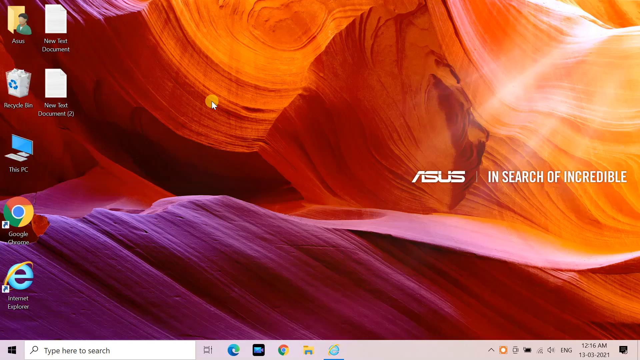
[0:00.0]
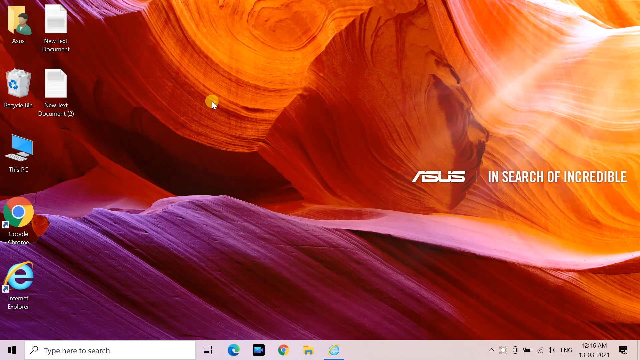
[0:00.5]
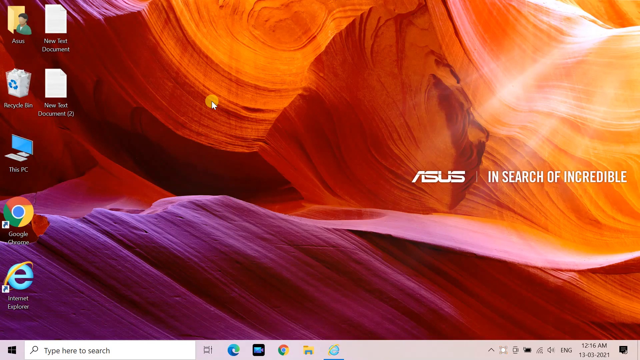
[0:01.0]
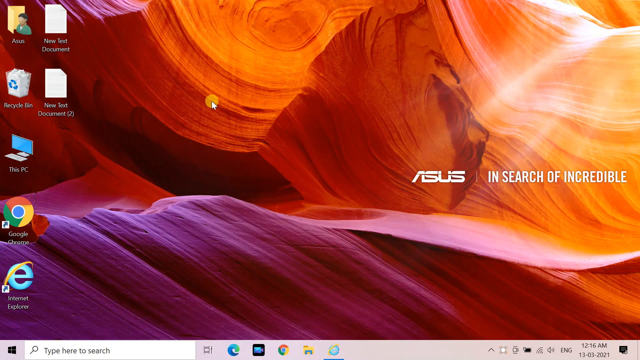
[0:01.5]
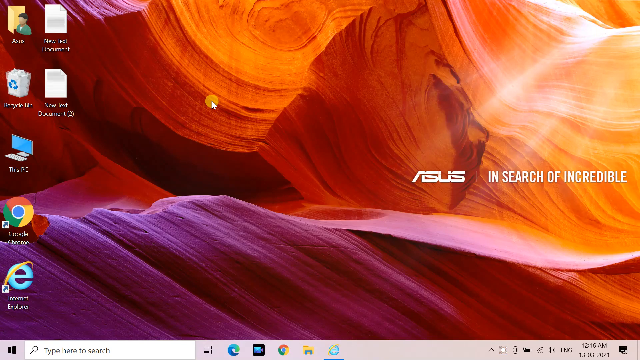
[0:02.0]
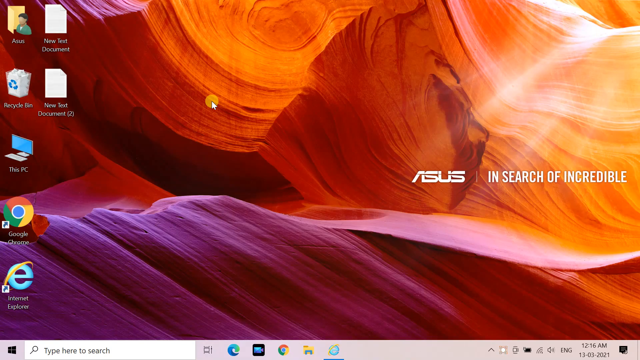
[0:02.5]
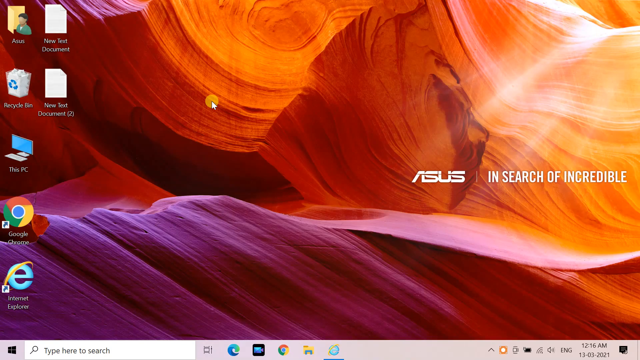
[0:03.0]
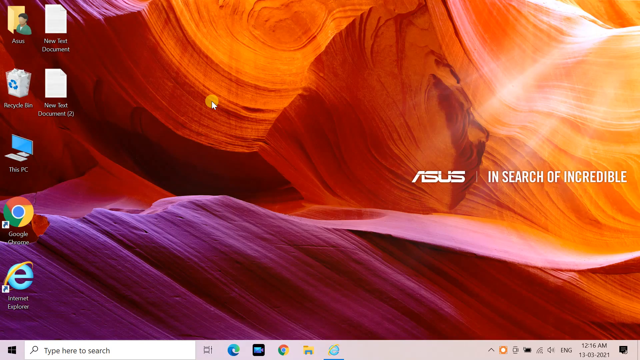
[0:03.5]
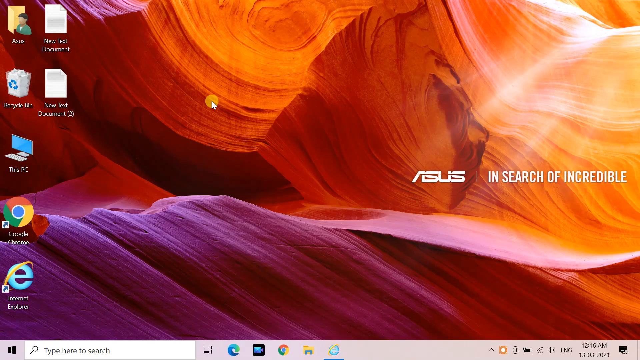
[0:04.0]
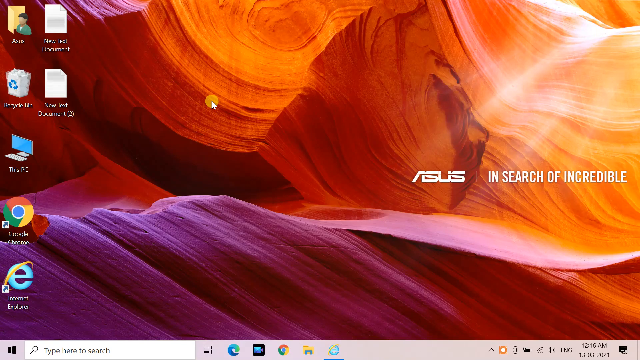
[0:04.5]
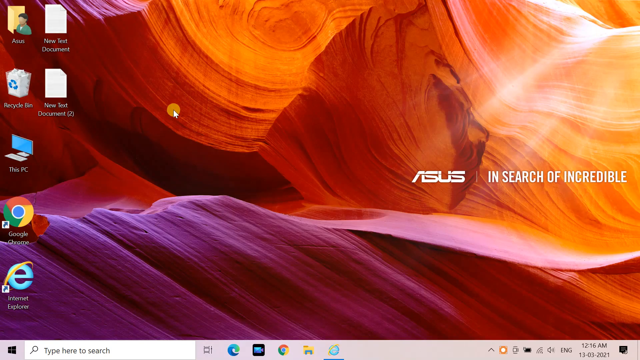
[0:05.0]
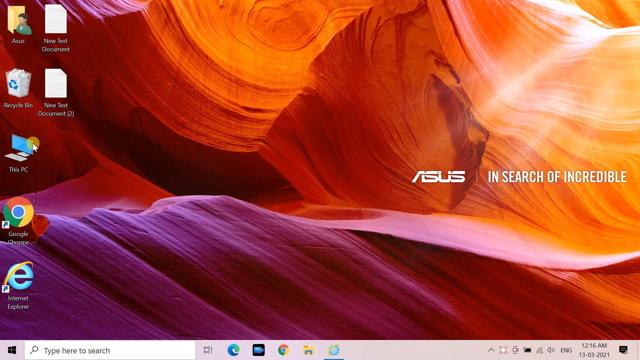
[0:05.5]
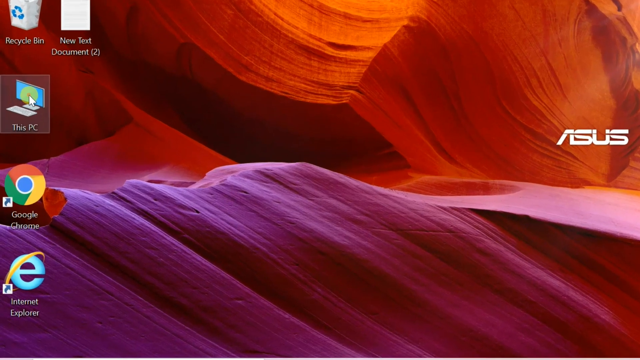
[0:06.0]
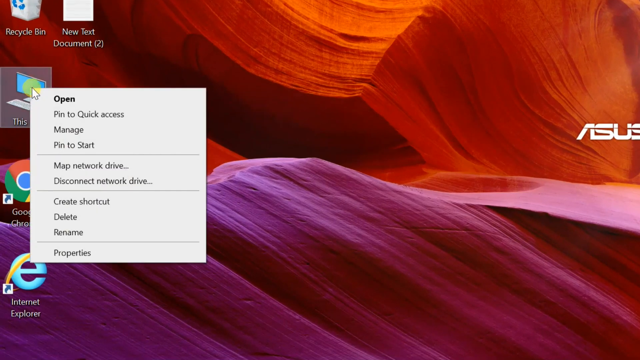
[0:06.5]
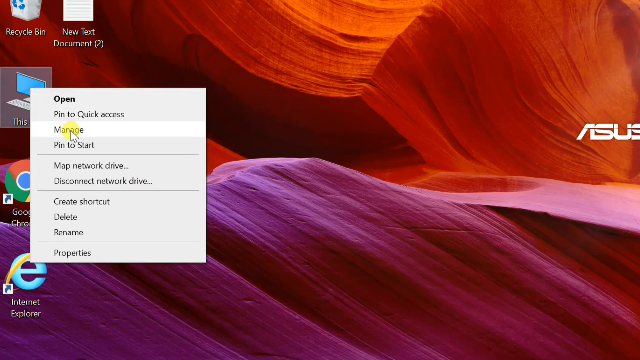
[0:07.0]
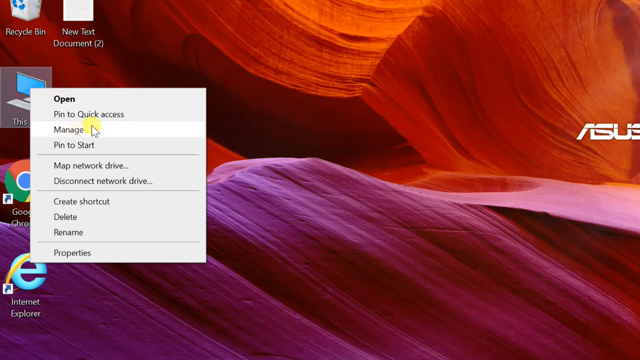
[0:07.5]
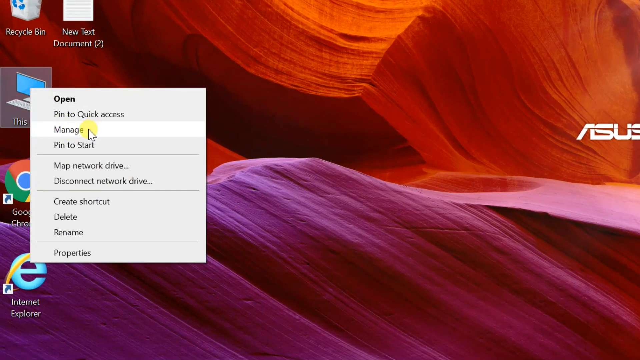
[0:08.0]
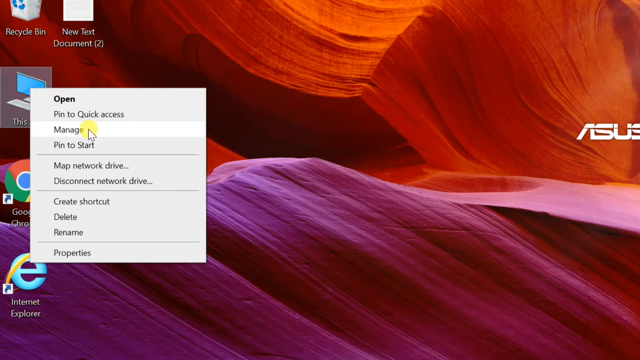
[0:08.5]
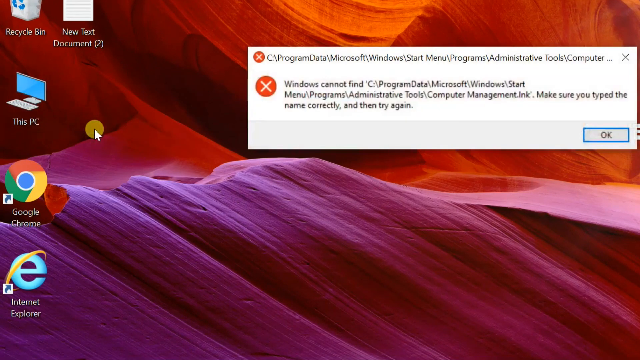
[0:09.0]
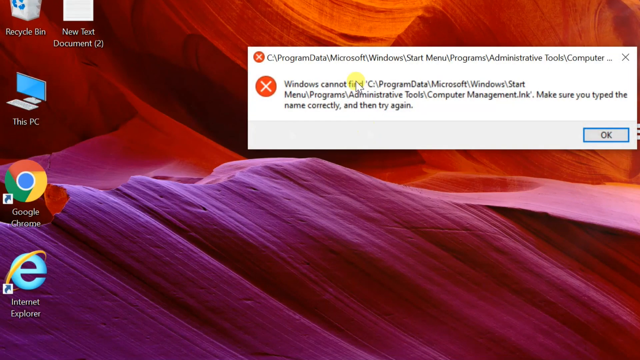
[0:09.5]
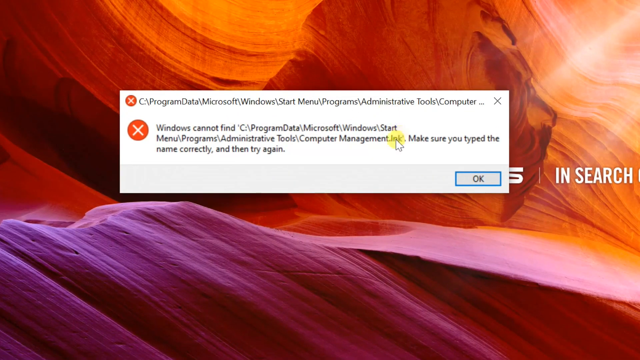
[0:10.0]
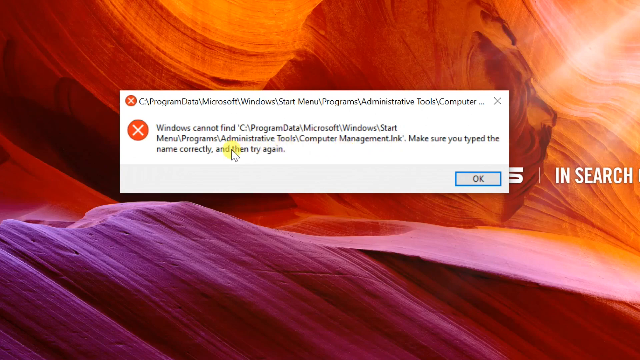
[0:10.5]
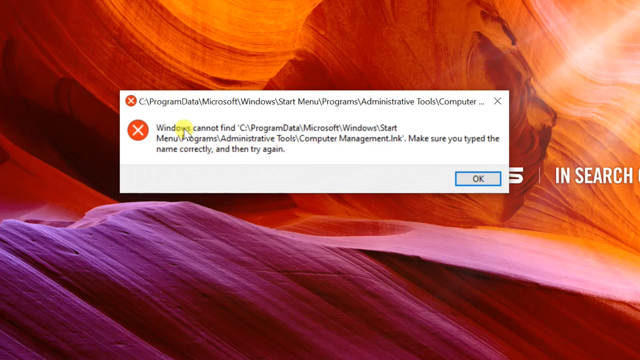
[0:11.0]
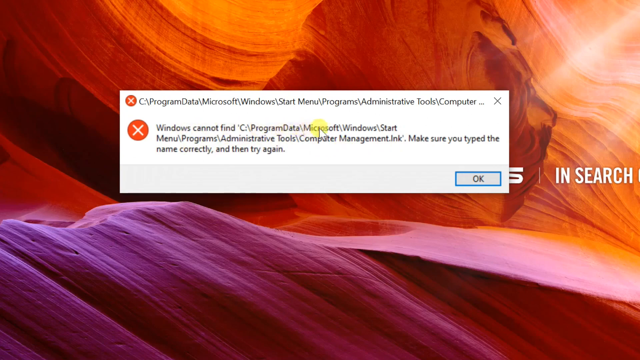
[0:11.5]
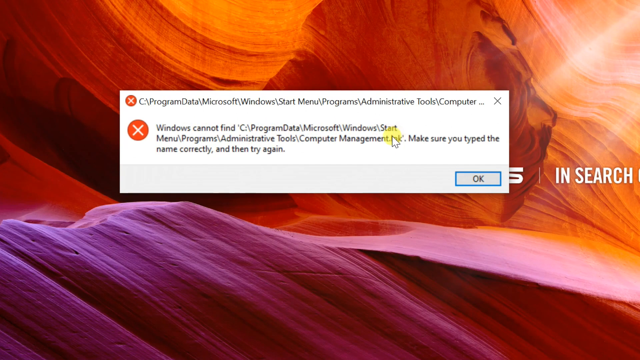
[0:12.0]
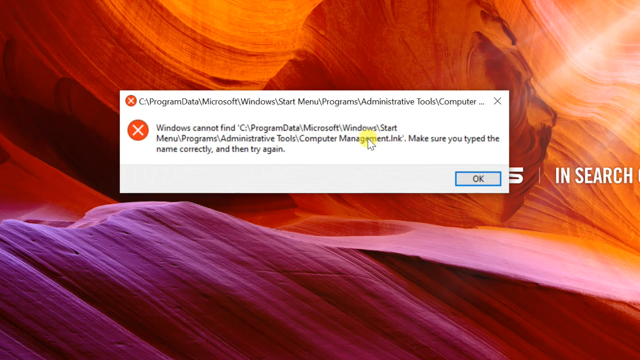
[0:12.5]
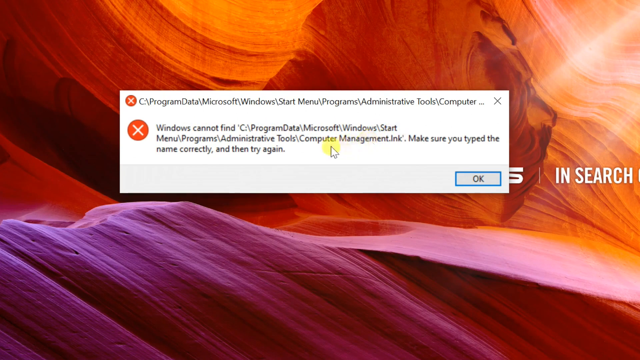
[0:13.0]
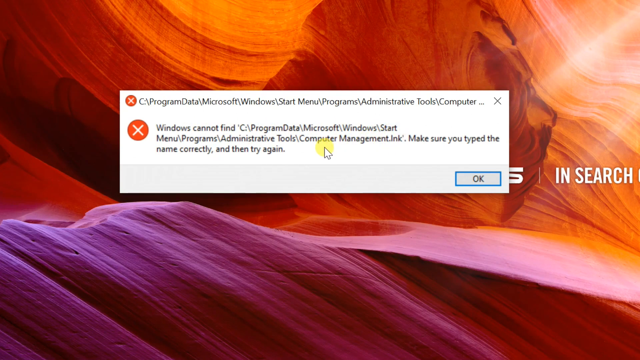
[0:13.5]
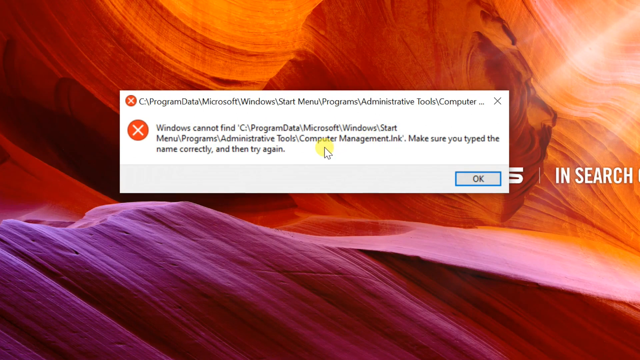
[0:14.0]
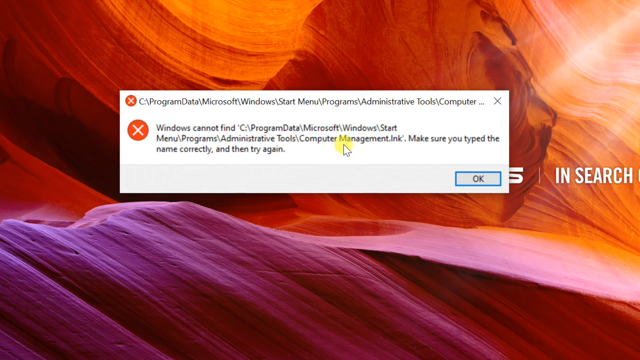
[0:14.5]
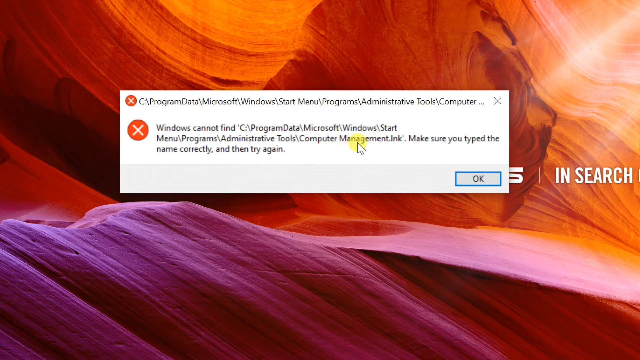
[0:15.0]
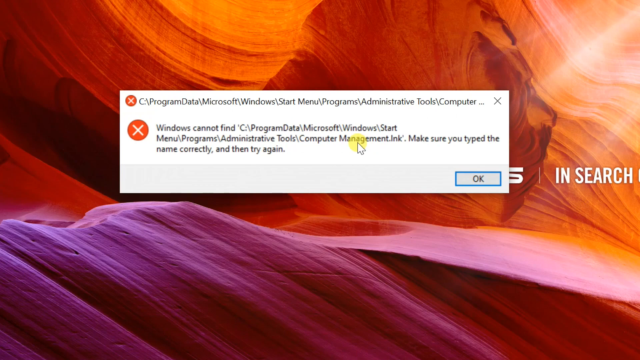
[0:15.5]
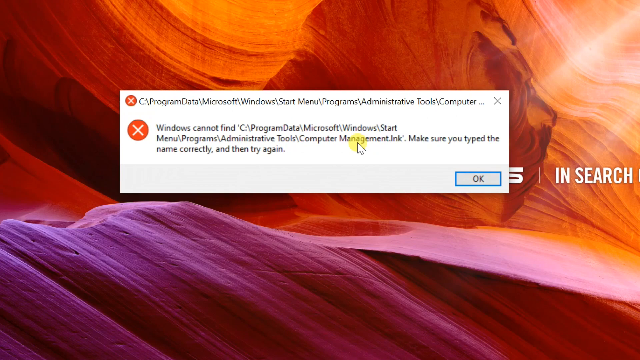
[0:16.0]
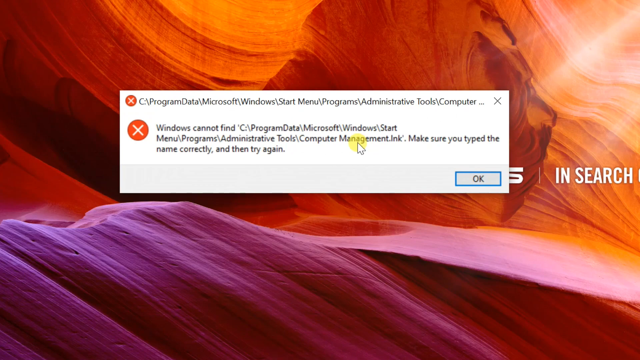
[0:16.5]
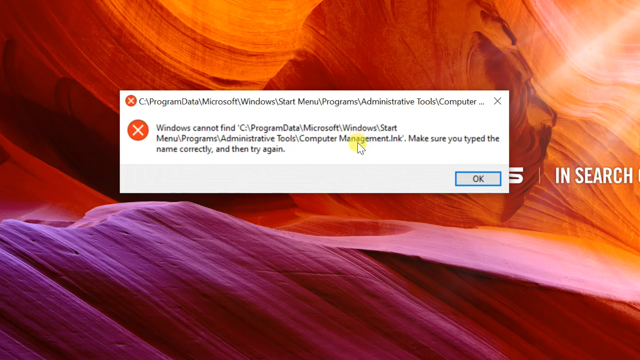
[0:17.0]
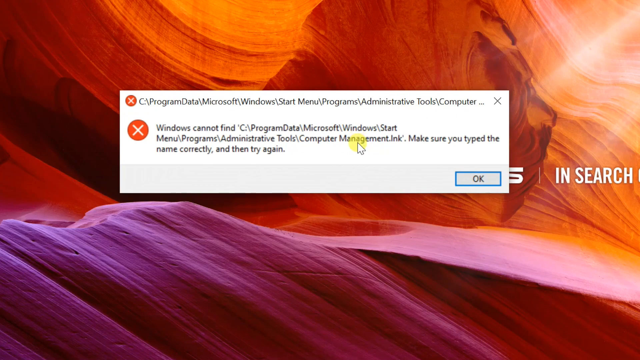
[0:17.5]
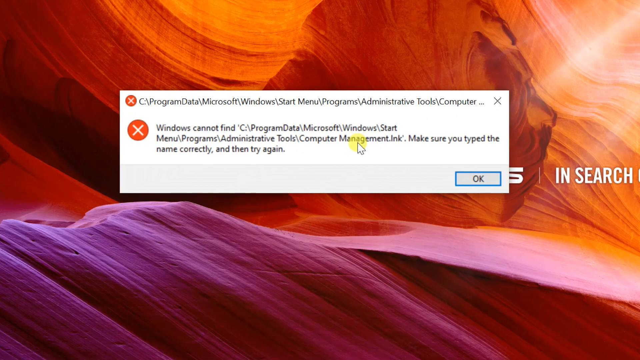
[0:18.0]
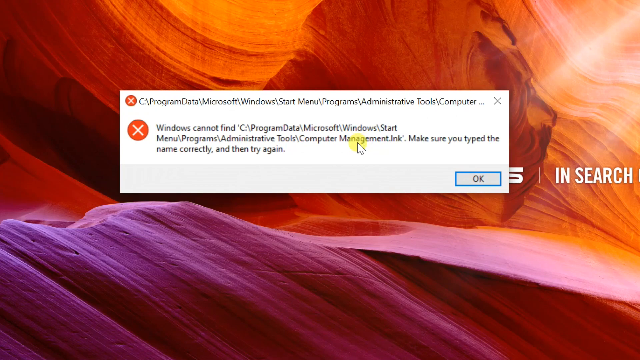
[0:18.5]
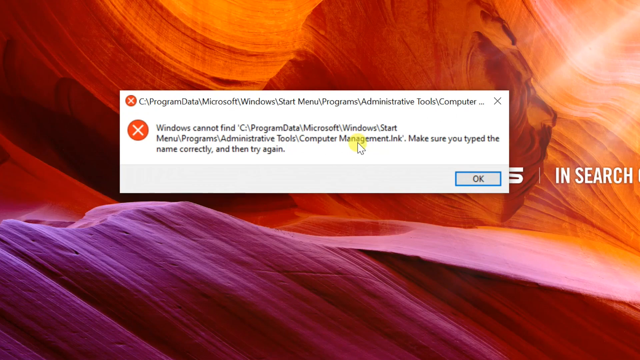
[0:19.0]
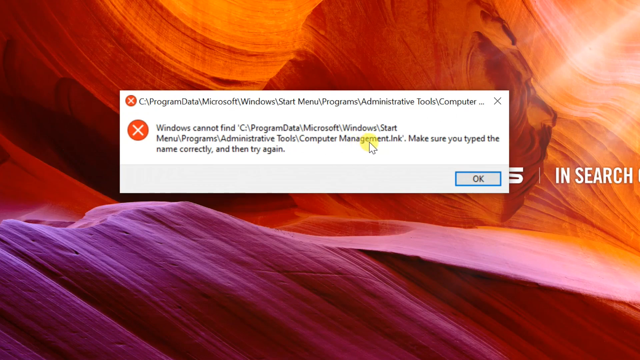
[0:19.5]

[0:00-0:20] A computer screen is shown; it looks like a Microsoft screen, and it seems to be mirrored so that the viewer can track what is being done on the computer. It seems the user clicks on "this PC," then clicks Manage, and an error window comes up saying the folder cannot be found. The pop-up seems to halt the next steps. The screen reads "ASUS in search of incredible," and the background looks like some sort of mountain range. There are very few icons on the screen. It seems to be some sort of screen recording, so not much changes as the user clicks through. The mouse pointer has an orange dot on it that shows where the user is clicking.